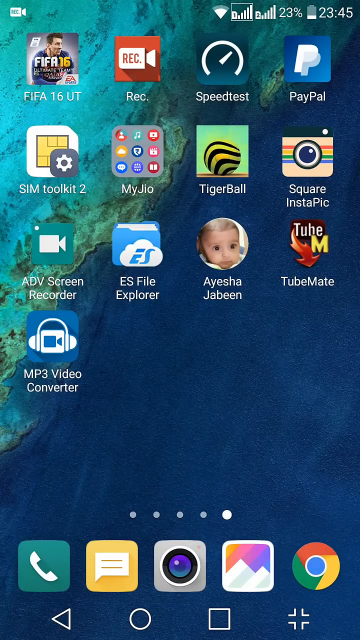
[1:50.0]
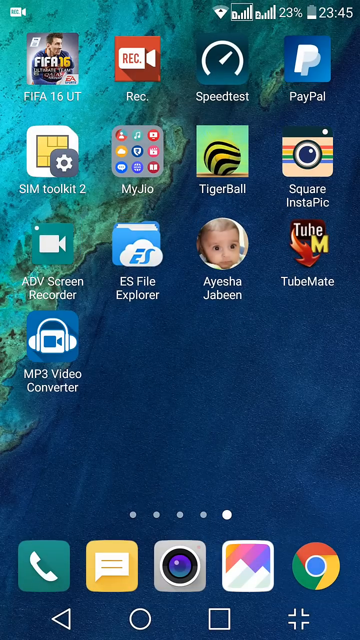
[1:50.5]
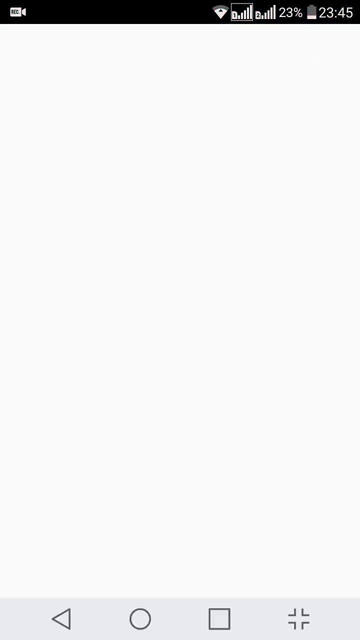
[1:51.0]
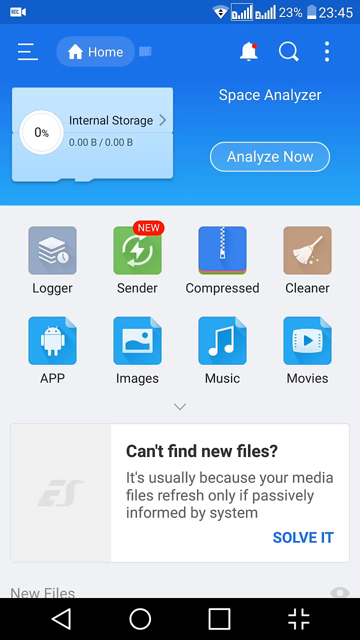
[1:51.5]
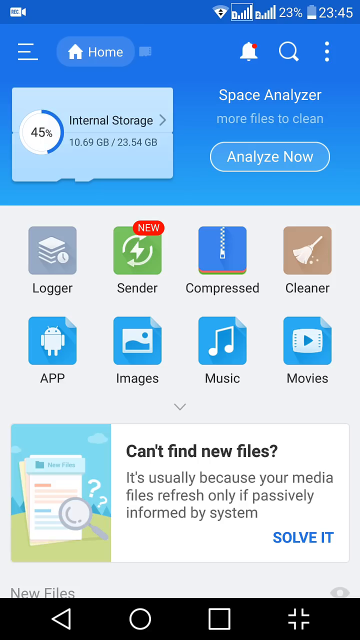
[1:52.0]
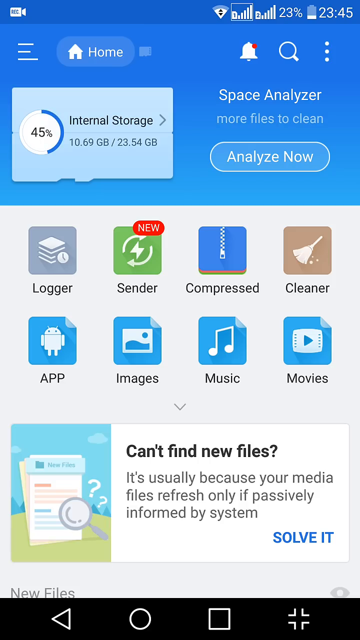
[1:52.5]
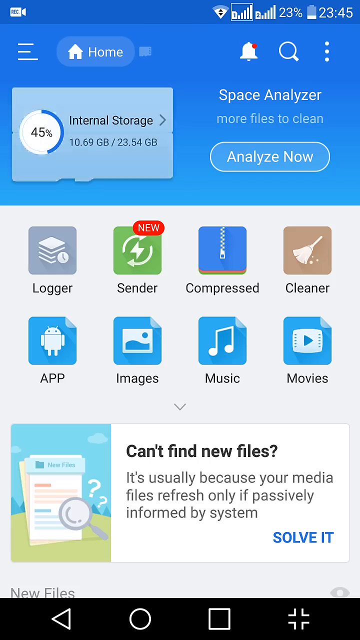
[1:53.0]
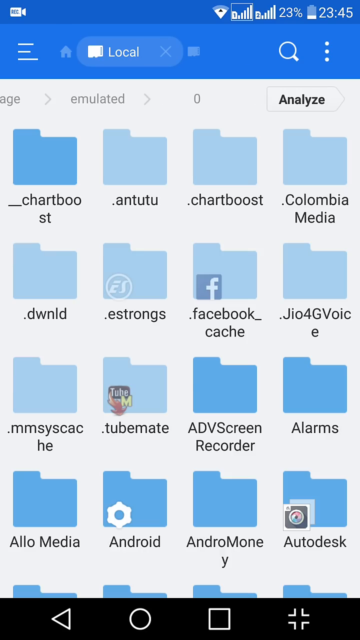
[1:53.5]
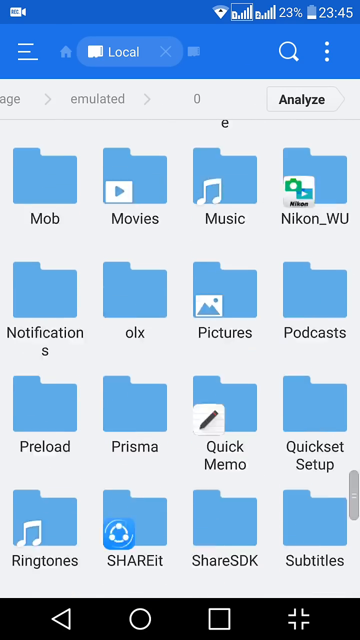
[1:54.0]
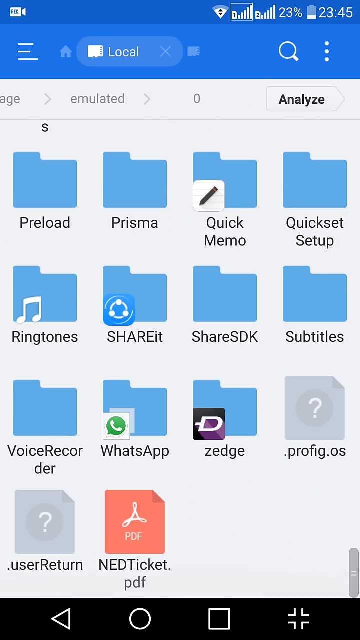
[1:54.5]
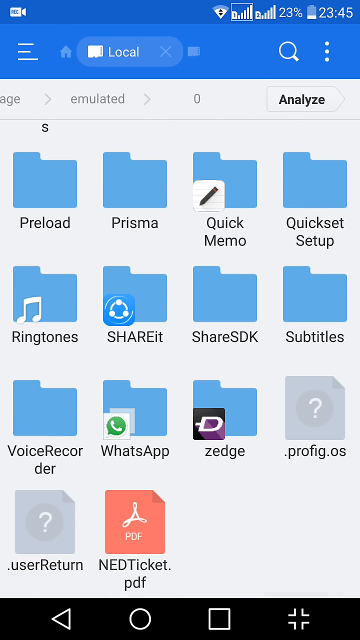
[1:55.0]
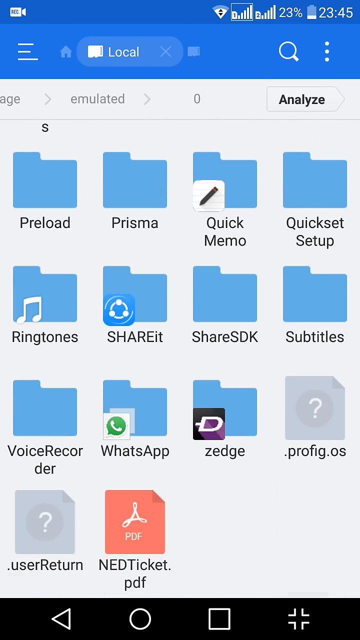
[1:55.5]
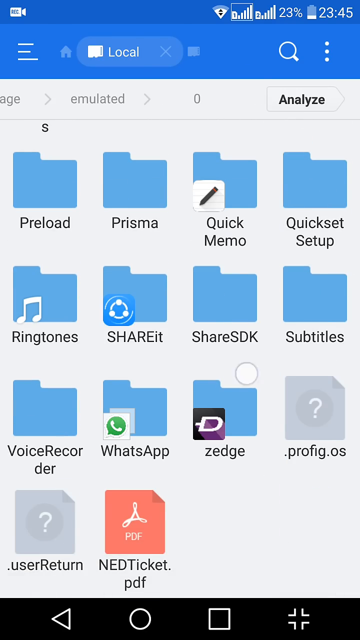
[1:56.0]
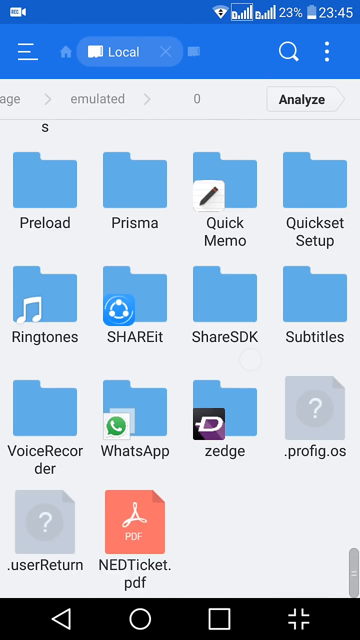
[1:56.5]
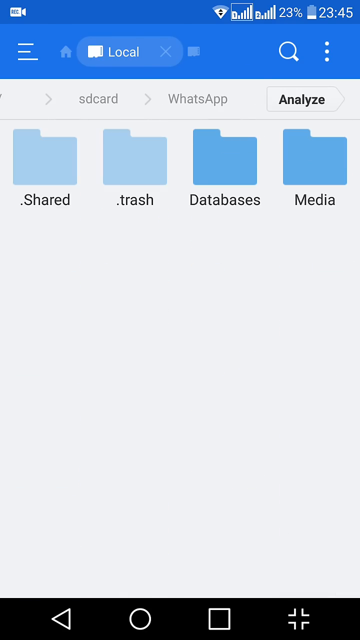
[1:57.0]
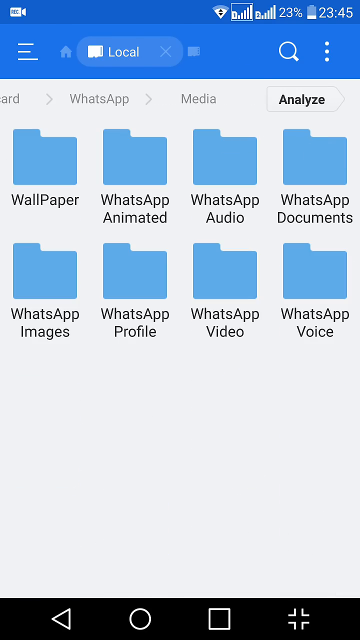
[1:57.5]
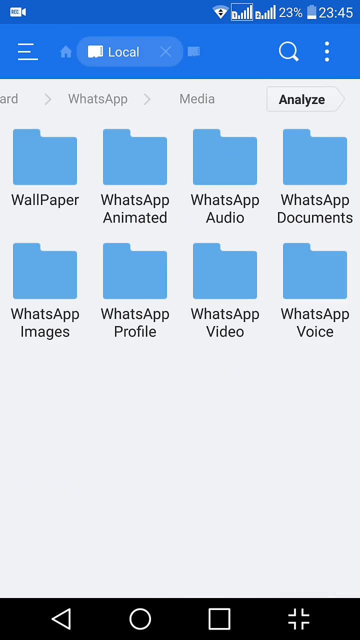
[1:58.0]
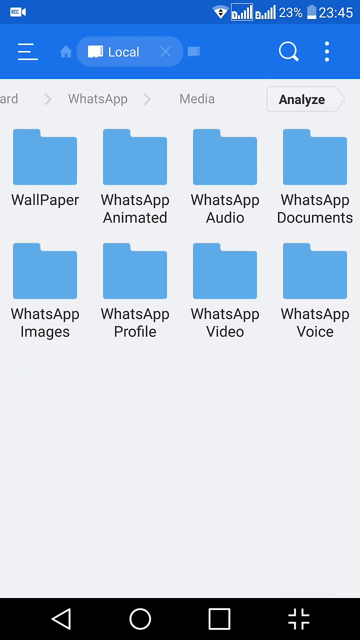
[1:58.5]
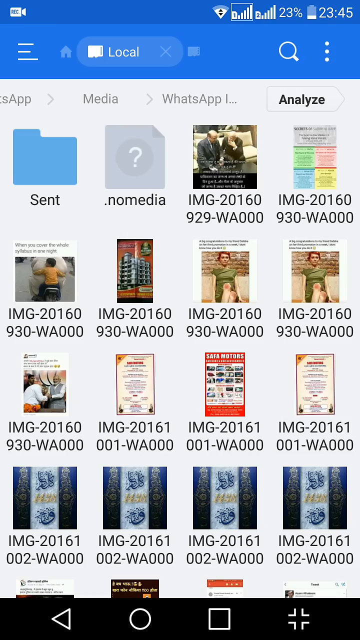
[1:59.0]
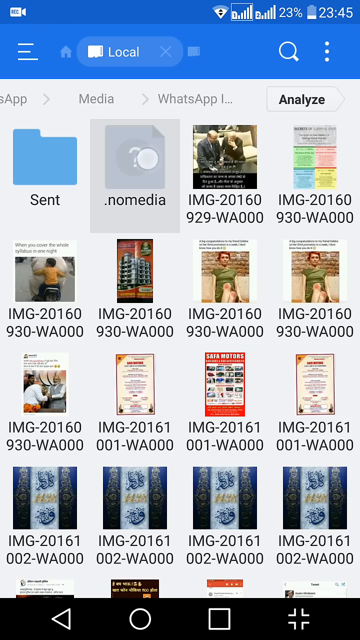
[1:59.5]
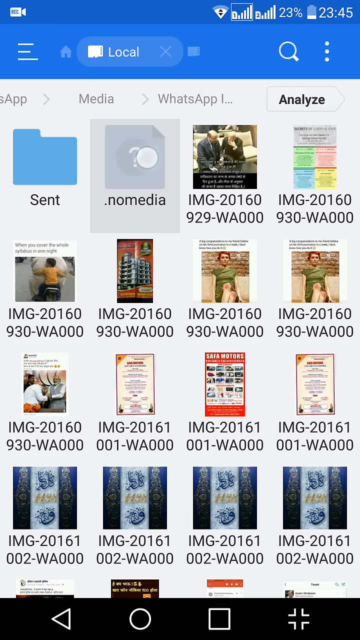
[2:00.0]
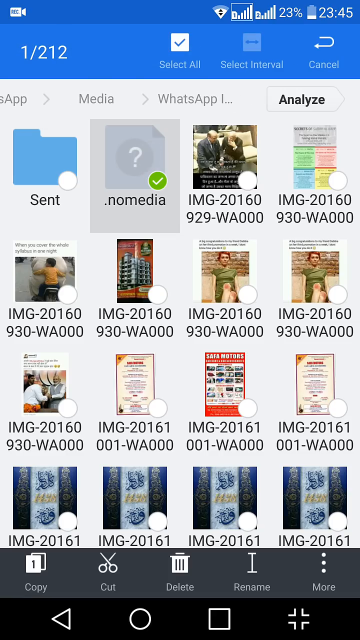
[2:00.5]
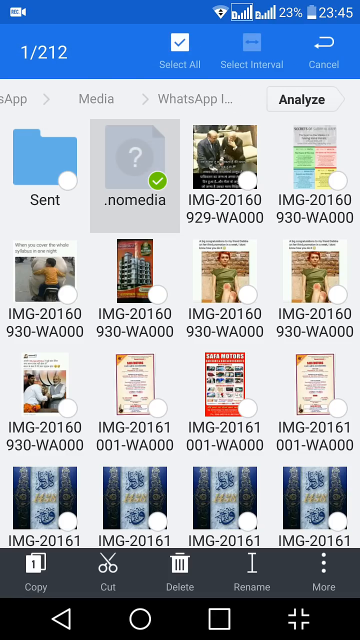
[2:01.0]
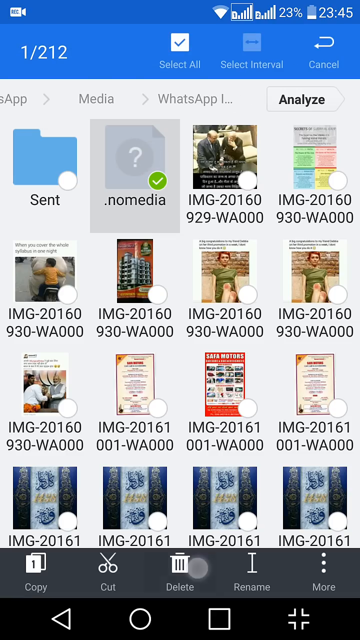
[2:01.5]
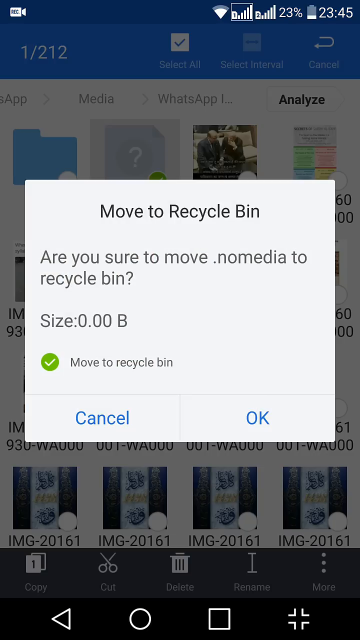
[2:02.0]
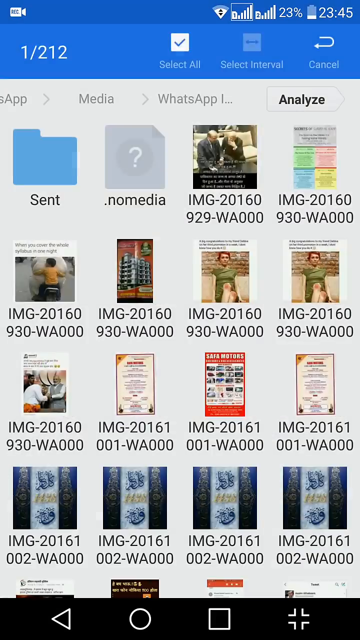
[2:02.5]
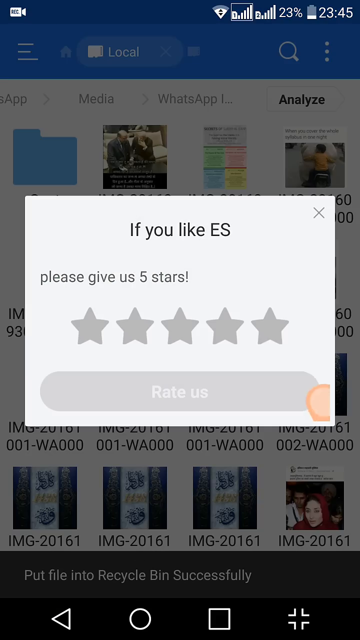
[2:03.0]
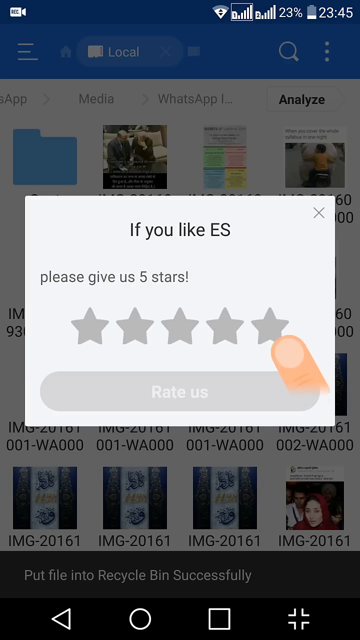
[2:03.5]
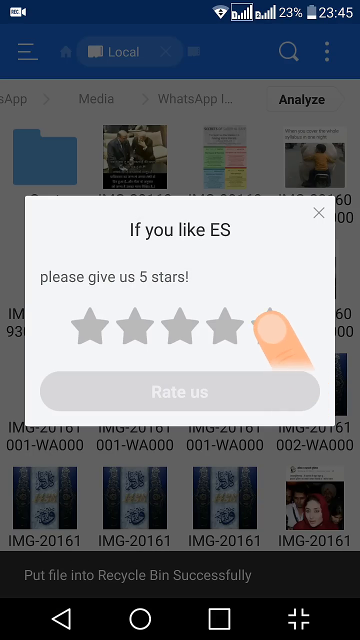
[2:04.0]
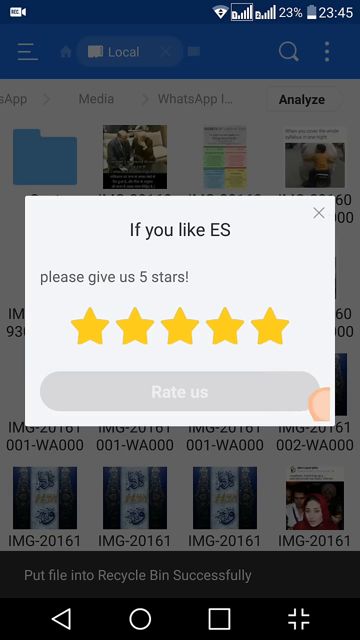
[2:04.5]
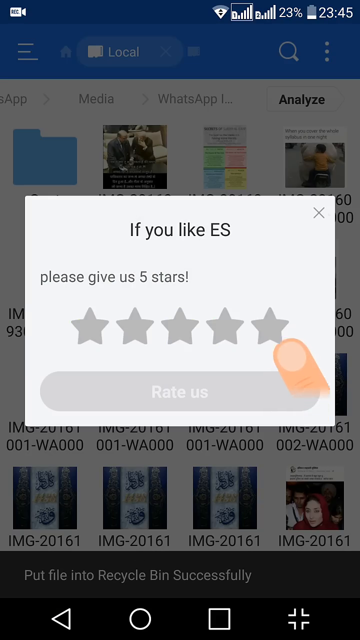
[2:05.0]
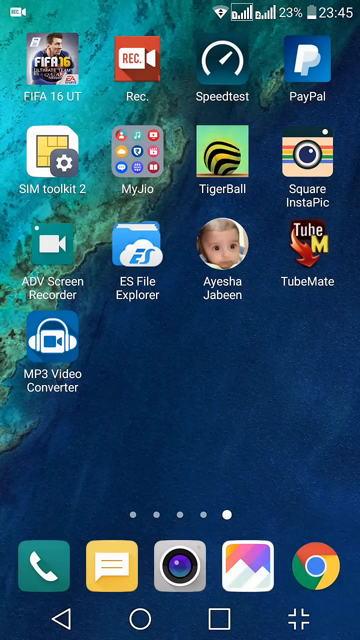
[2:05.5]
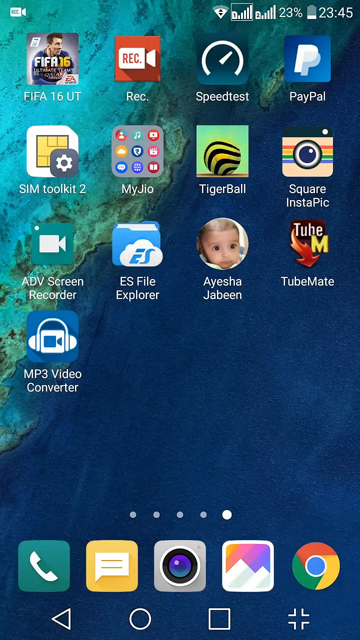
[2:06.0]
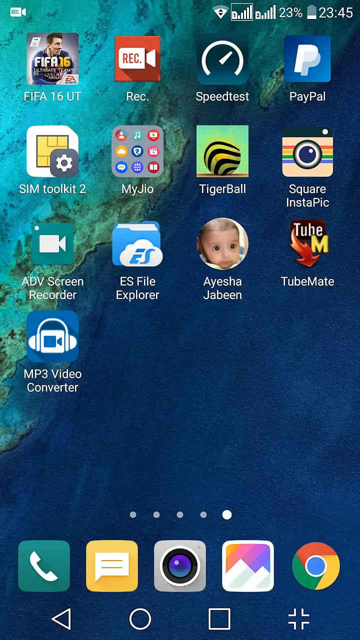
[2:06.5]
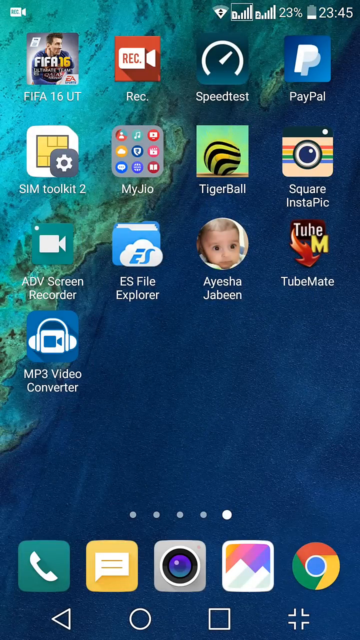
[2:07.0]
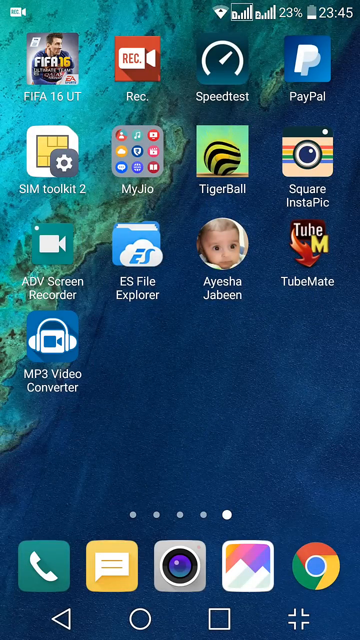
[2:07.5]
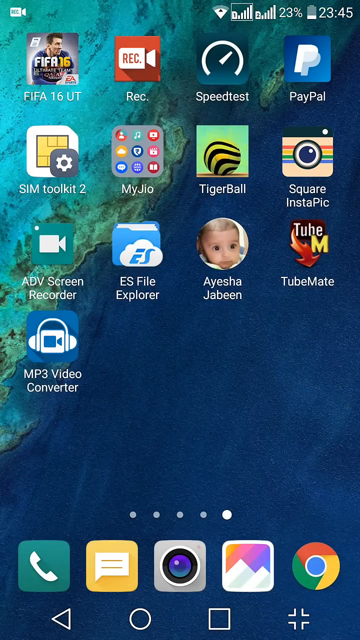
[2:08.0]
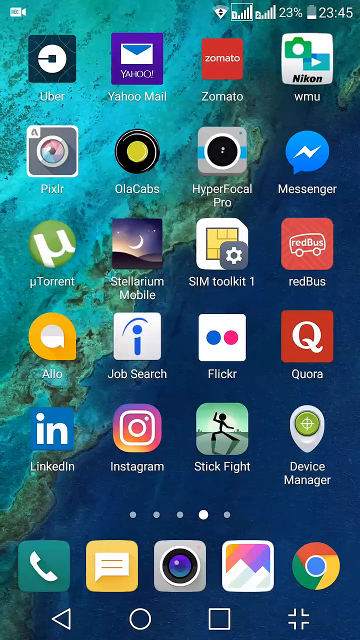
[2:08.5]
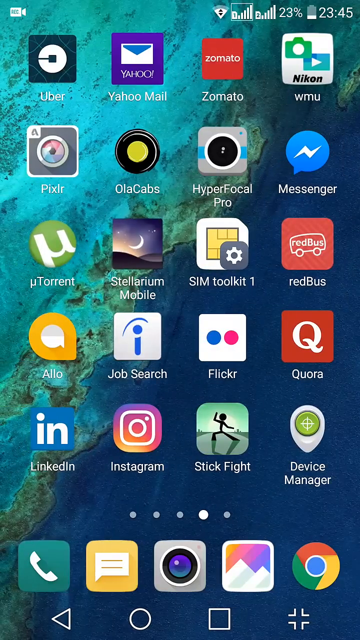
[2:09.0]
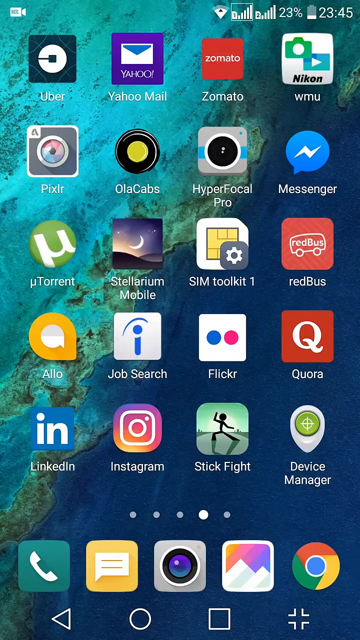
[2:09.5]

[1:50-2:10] The time is still 23.45, fifteen minutes before midnight, and the phone is still charged at only 23%, with no lightning bolt on the battery, so it is not charging. PayPal appears in the corner, along with MP3 Video Converter. The person apparently goes to the new file section and scrolls down through folders including Preload, Prisma, Quick Memo, Quick Setup, Ringtone, Shareit, Share SDK, Subtitles, Voice Recorder, WhatsApp, Zedge, Ticket and PDF. They scroll down and apparently go to WhatsApp, click on the newly created nomedia file, and apparently delete it.